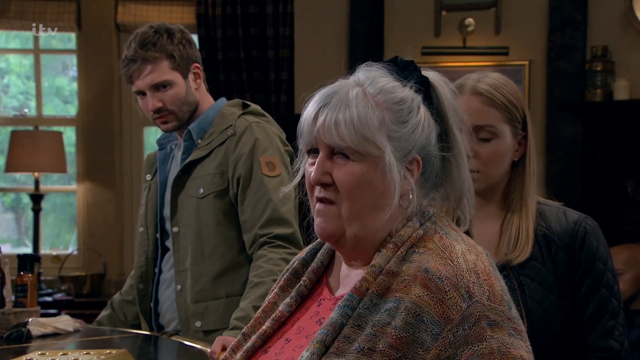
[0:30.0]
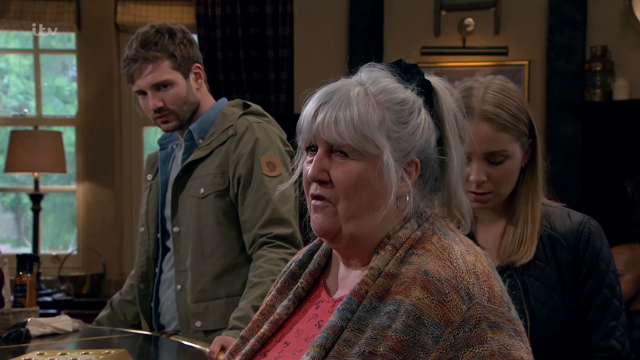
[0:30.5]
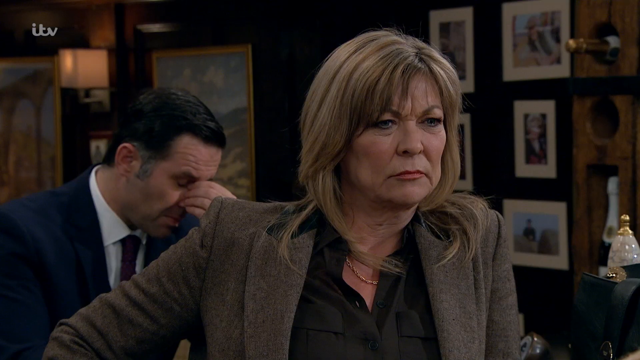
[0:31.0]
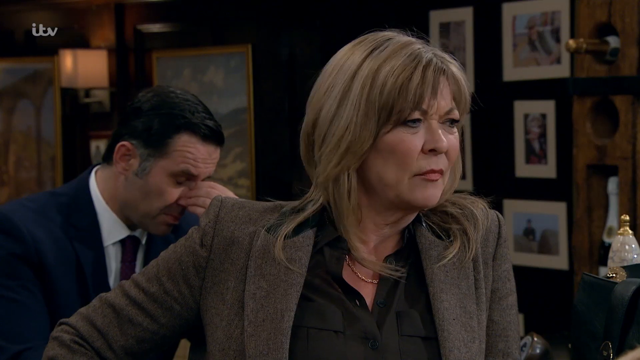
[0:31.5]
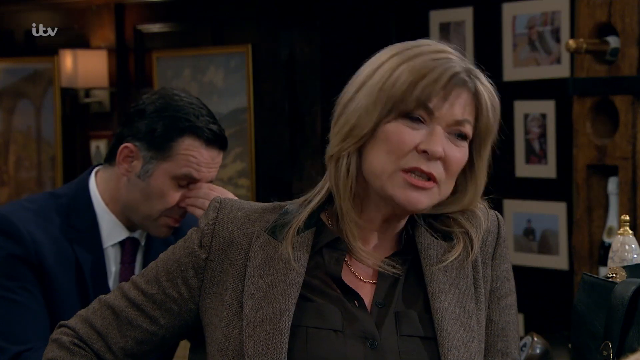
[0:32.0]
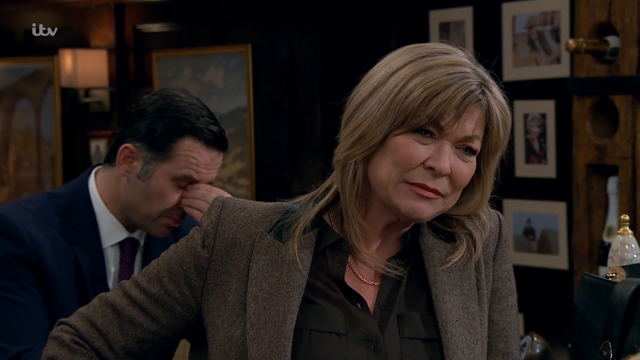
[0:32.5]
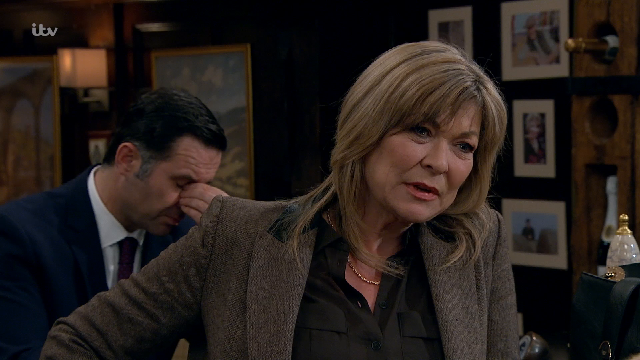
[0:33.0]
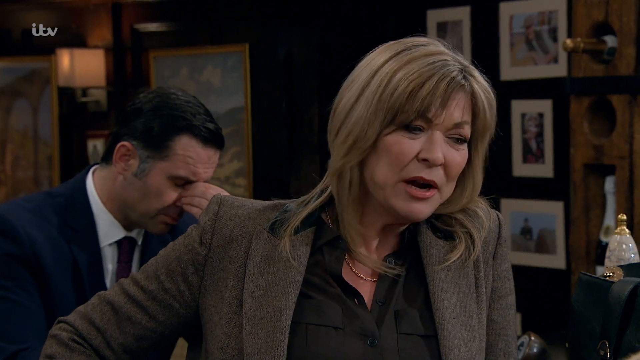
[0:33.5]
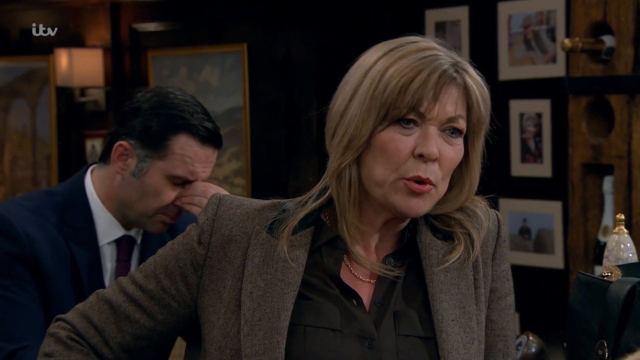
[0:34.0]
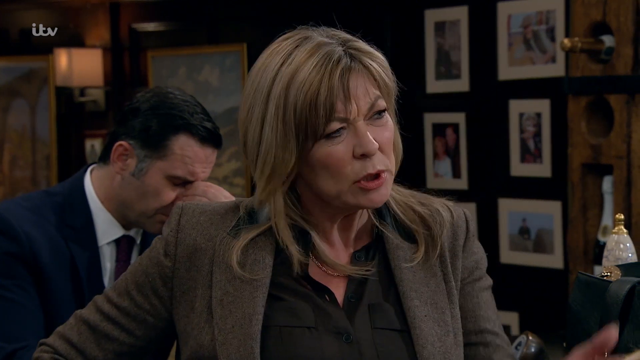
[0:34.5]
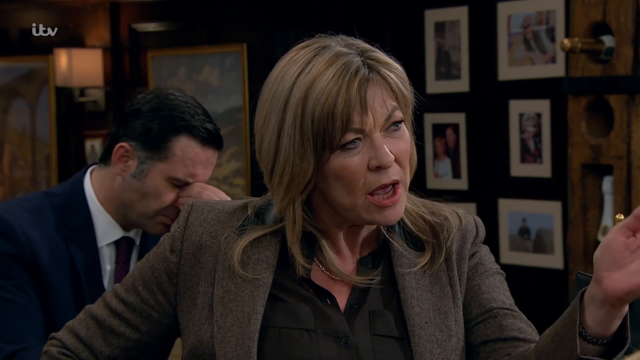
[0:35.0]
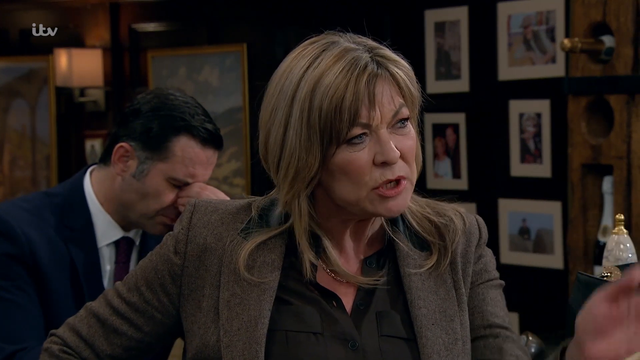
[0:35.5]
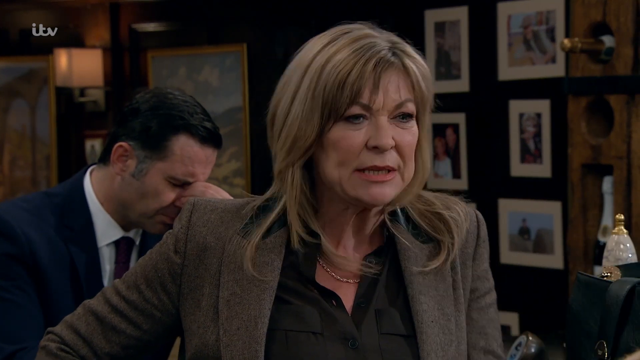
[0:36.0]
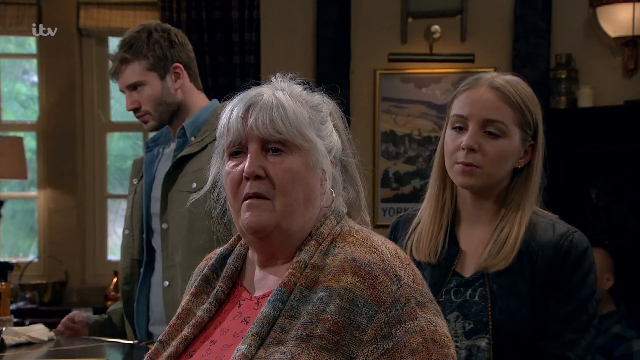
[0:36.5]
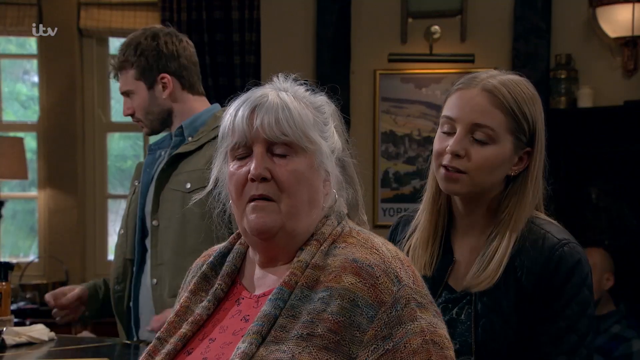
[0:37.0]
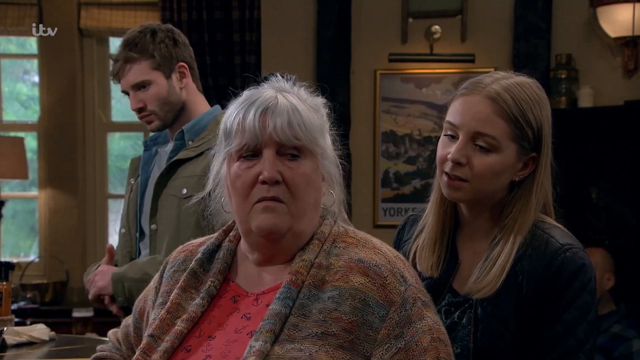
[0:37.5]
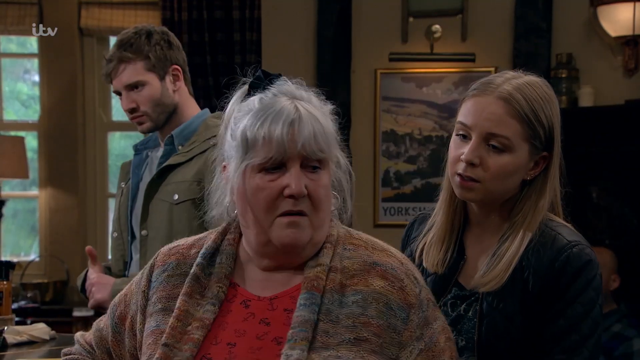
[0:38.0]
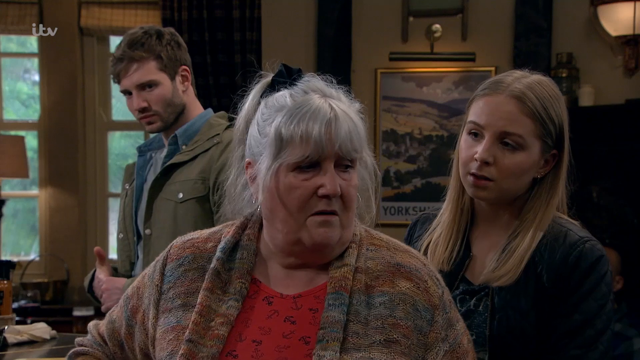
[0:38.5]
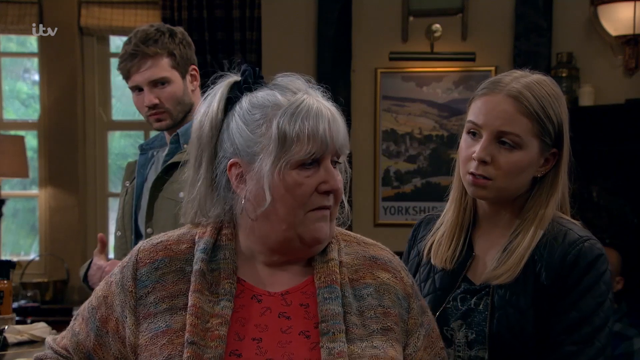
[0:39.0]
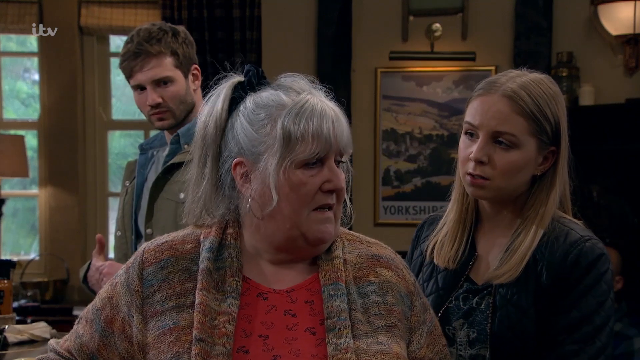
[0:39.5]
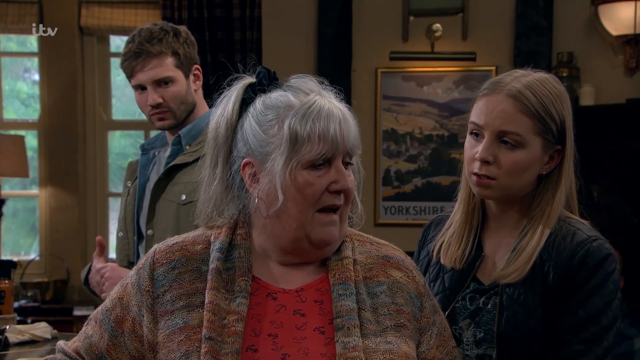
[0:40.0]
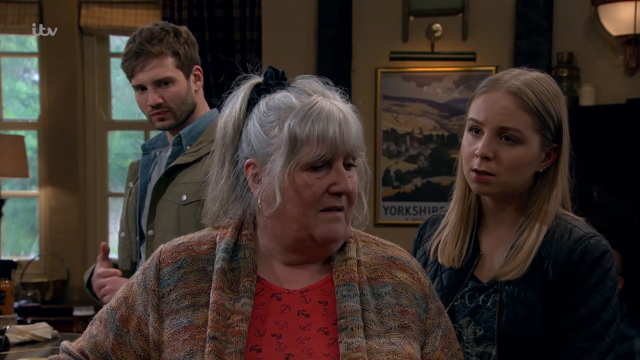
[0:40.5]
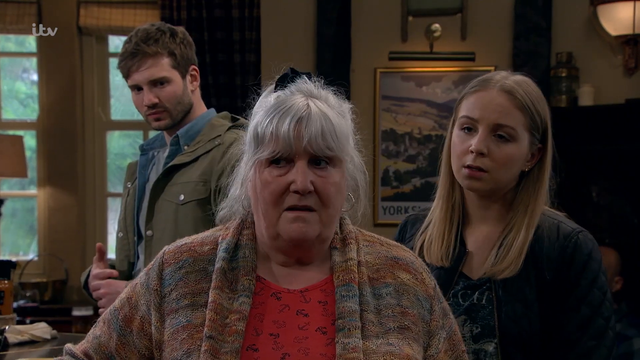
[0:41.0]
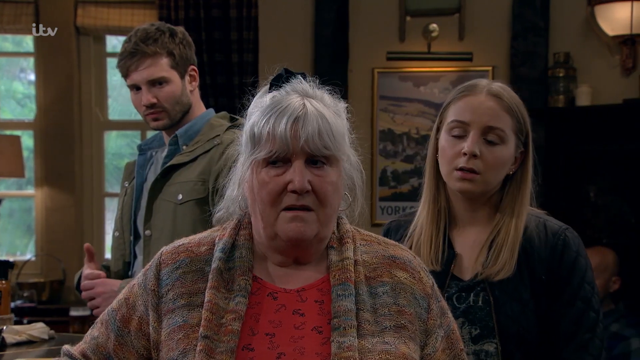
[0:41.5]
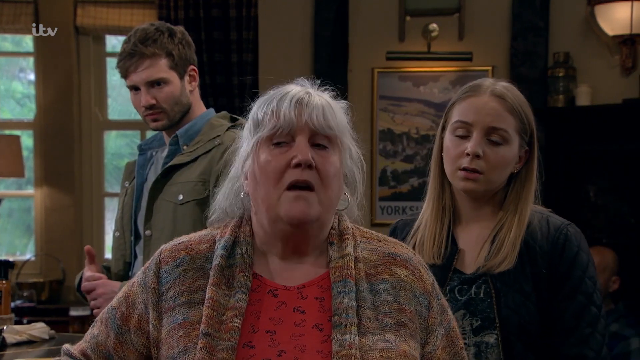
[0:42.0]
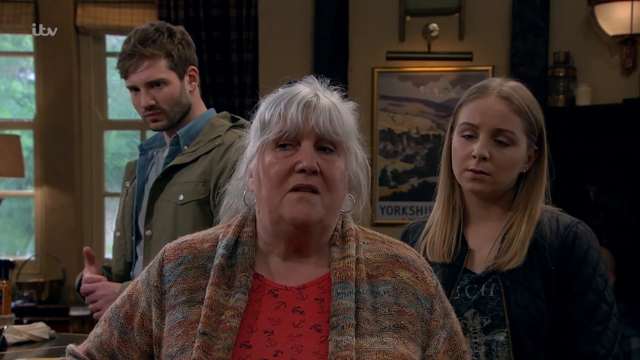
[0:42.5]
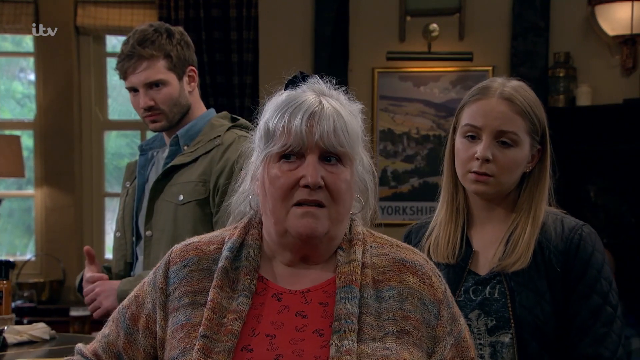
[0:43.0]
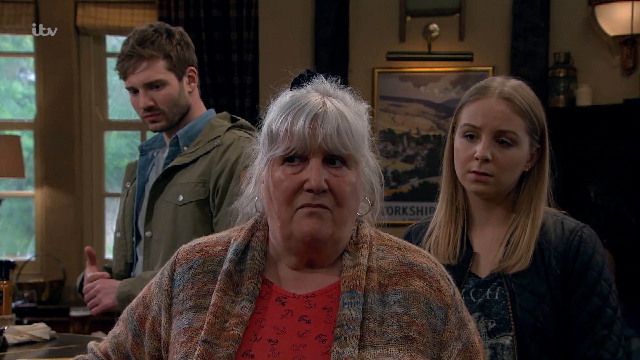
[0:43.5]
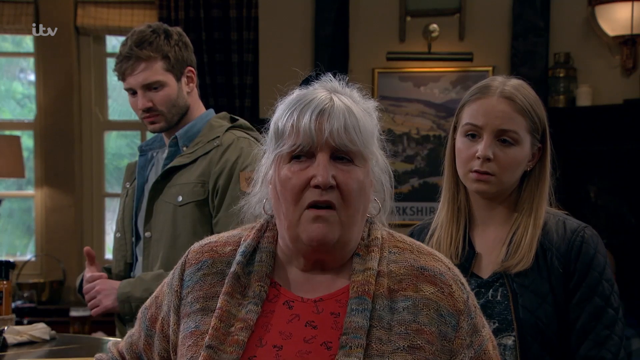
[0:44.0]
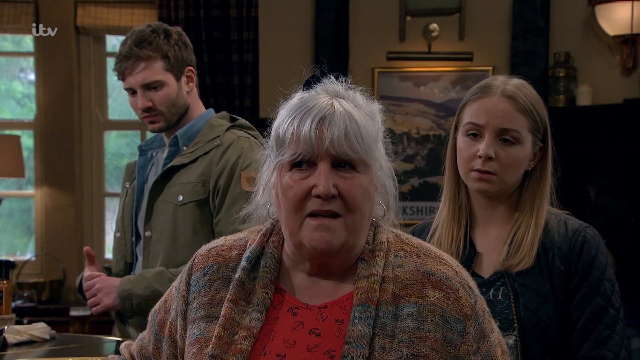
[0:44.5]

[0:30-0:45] The older woman, who has gray hair, is still talking to the other woman, who wears a gray coat and a black shirt. A man behind is pinching his nose, as if in frustration. There are pictures on the wall. The younger woman, who has long blonde hair and stands behind the older lady, starts to talk to the older woman, and the shot cuts back. The younger woman wears a darkish blue coat and a blue shirt dress of some kind, though it is hard to tell exactly what she is wearing. Behind them is a man in a green jacket and a blue button-up who seems to have a beard; he is pinching his hand. They are all inside the bar.